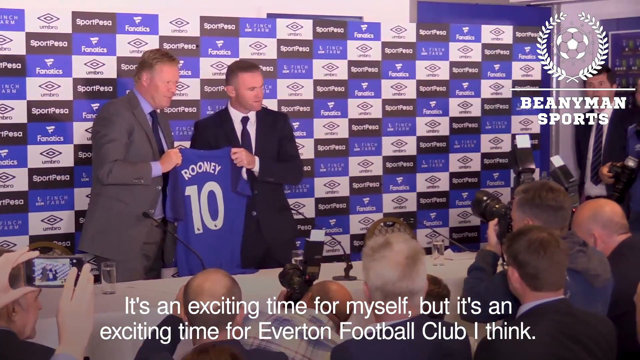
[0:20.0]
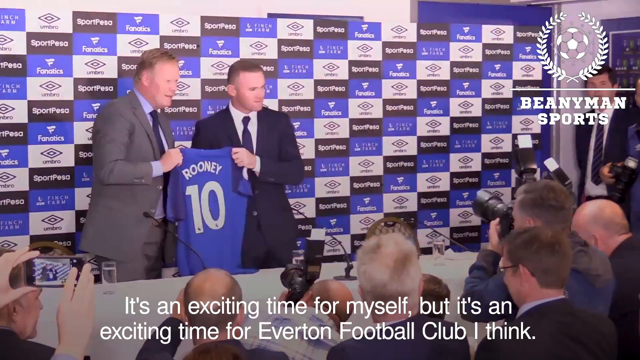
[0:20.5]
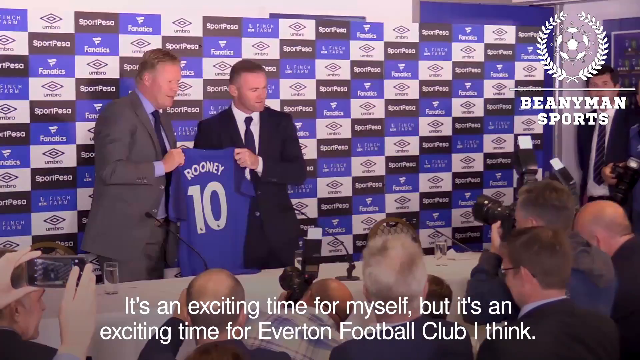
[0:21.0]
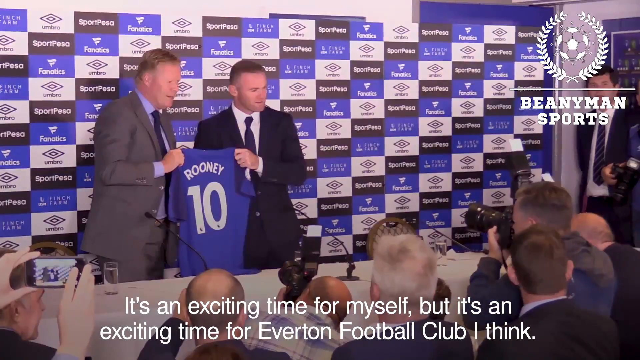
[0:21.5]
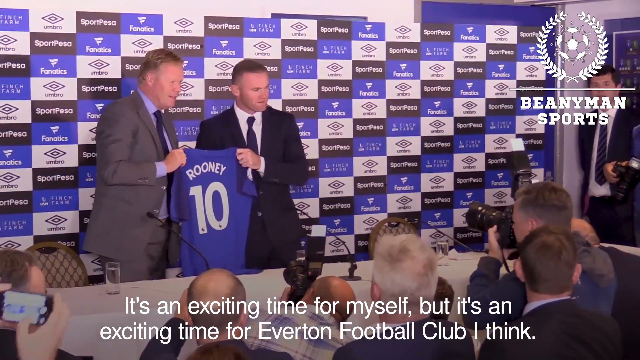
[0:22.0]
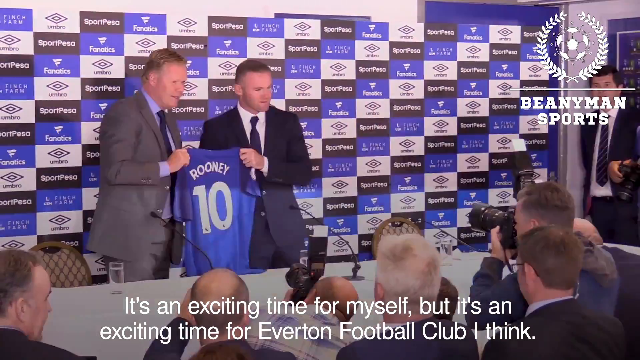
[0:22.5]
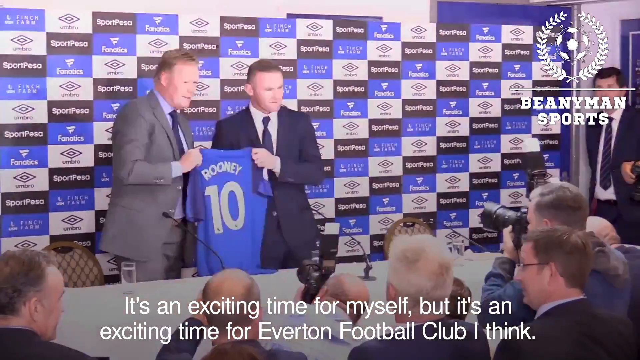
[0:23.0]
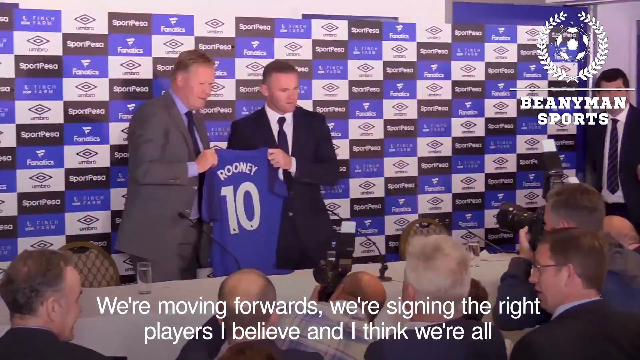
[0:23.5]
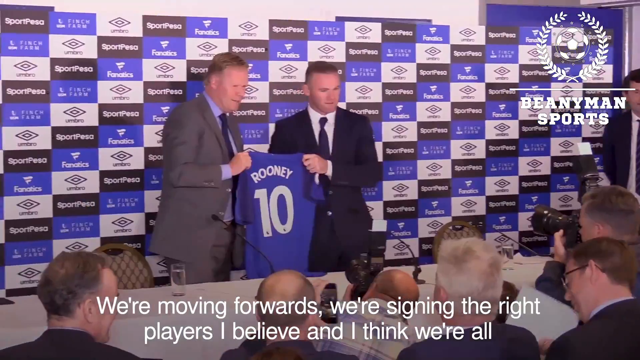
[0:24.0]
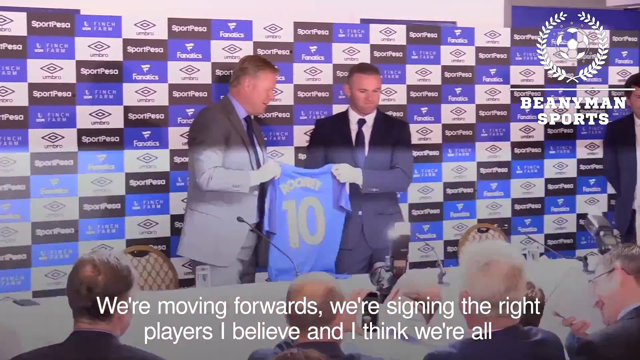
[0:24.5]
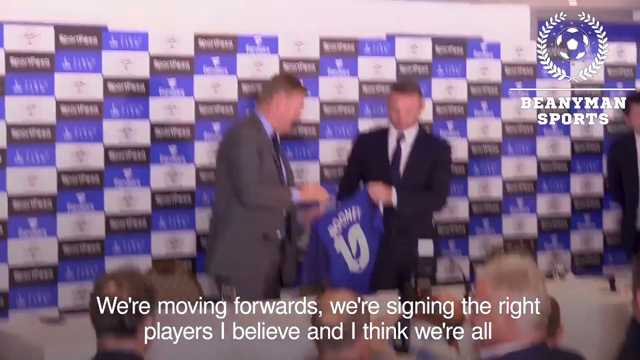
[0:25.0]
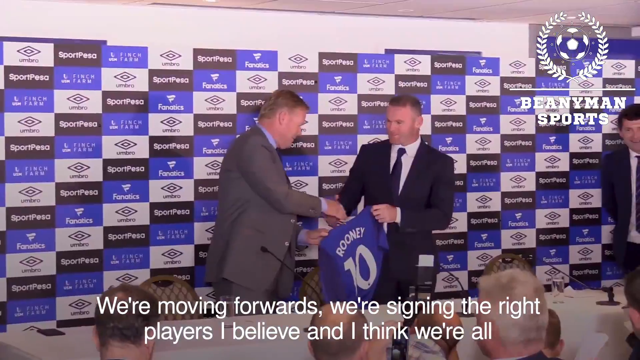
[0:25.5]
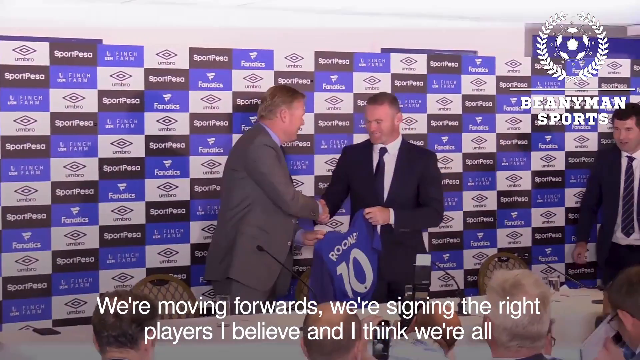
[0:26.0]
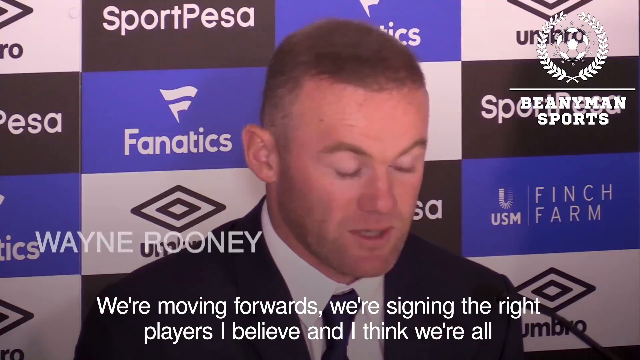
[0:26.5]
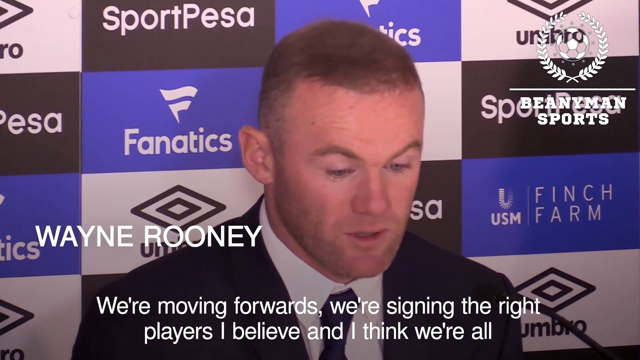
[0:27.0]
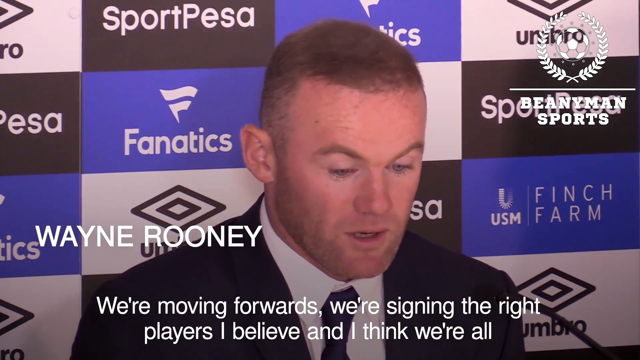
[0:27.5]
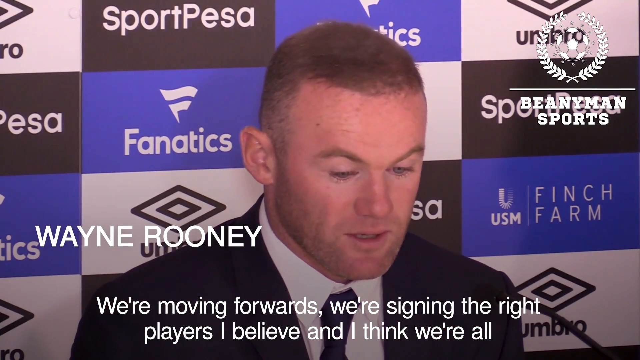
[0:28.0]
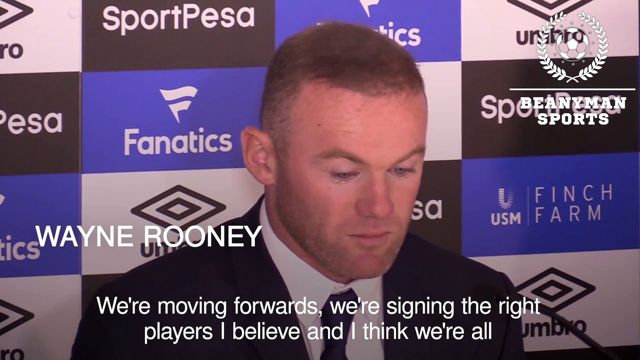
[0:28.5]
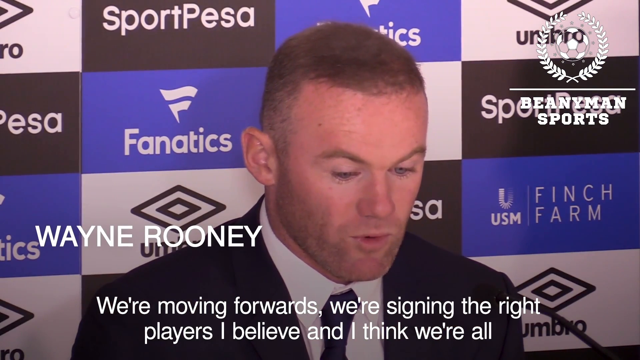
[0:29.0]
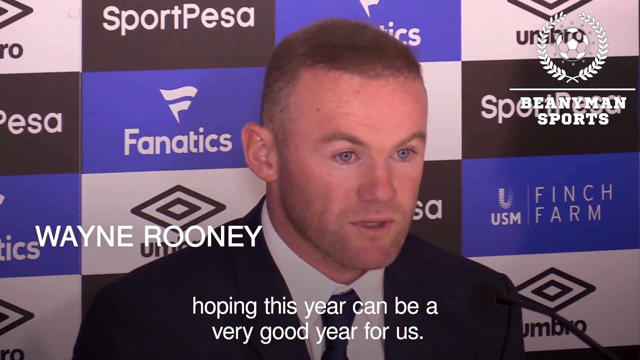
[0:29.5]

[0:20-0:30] The scene appears to be a sports conference, with a background full of sponsor icons that are a little hard to make out; some are white, some blue and some black. Ronnie and another man hold up the blue Ronnie 10 soccer shirt, and the Beanie Man sports icon is in the top left-hand side of the screen. Ronnie says, "it's an exciting time for myself but it's also an exciting time for Everton football club," suggesting the club has just signed him. He continues, "we're moving forward," apparently saying they are signing the right players, and "I think we're all hoping this year can be good for us." This speech comes after reporters take pictures of him and, apparently, the Everton club chairman.